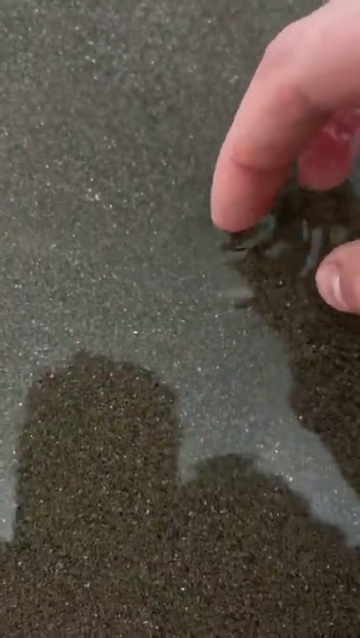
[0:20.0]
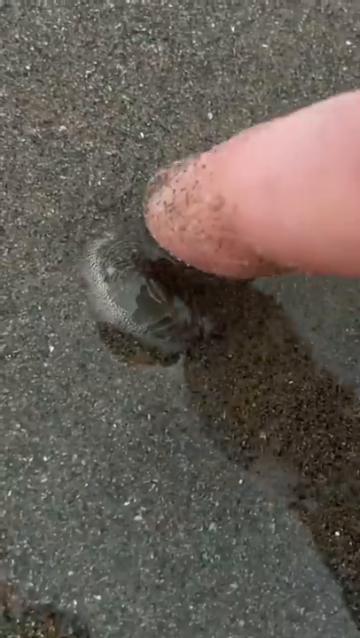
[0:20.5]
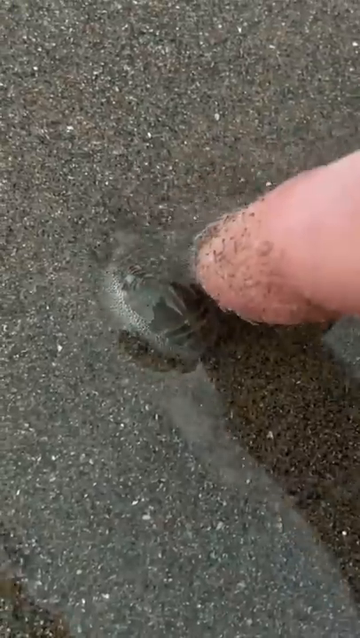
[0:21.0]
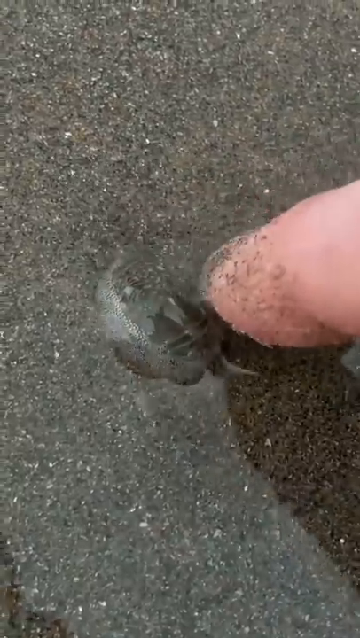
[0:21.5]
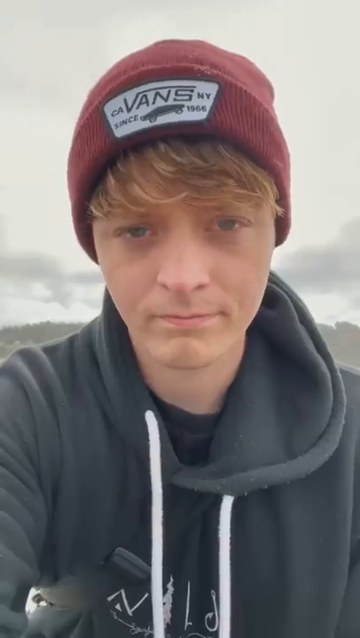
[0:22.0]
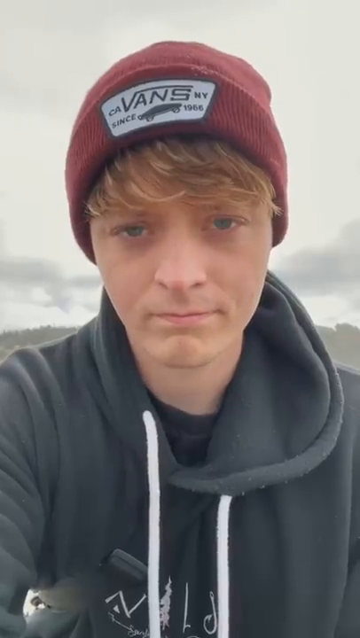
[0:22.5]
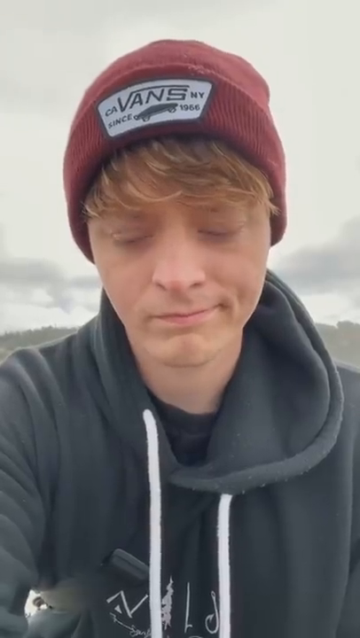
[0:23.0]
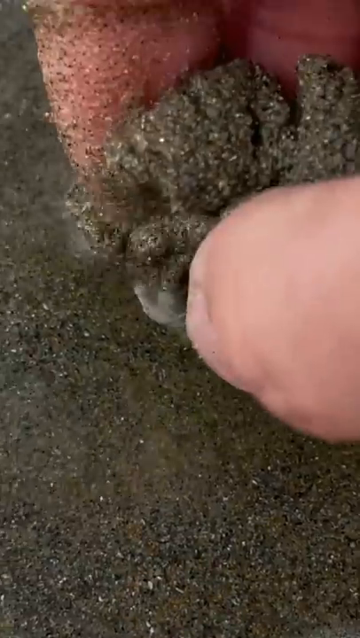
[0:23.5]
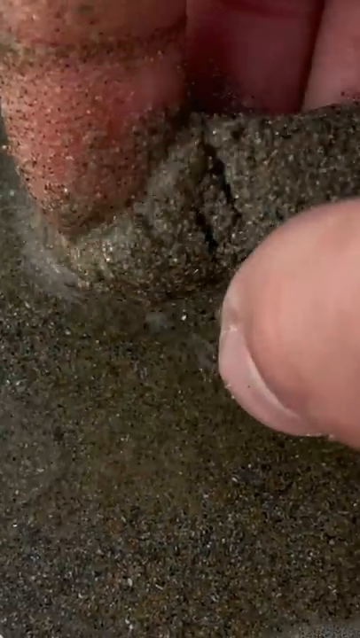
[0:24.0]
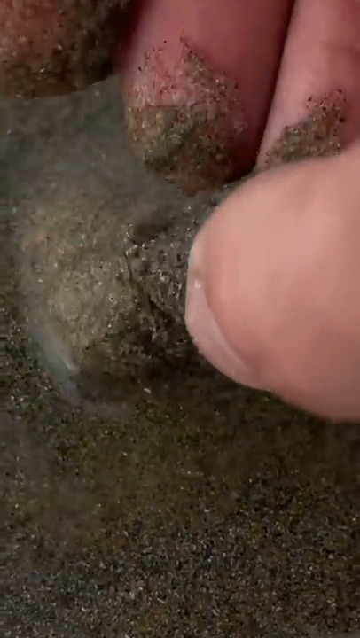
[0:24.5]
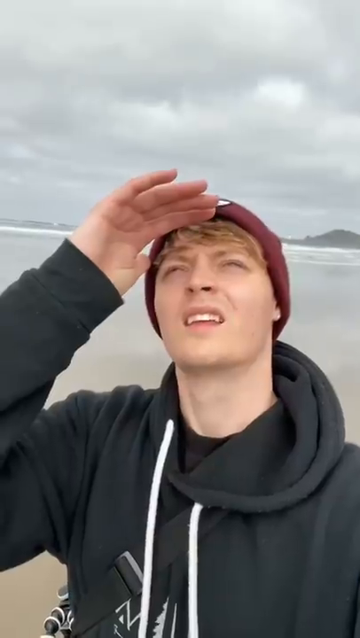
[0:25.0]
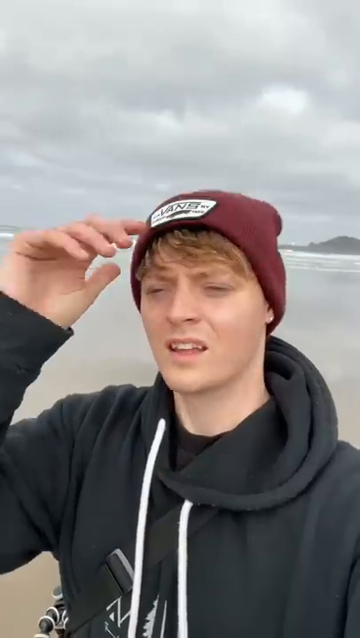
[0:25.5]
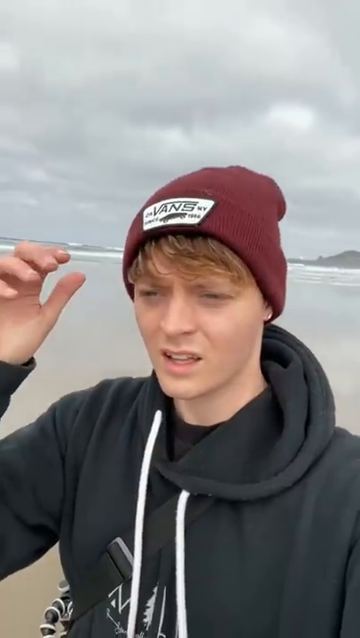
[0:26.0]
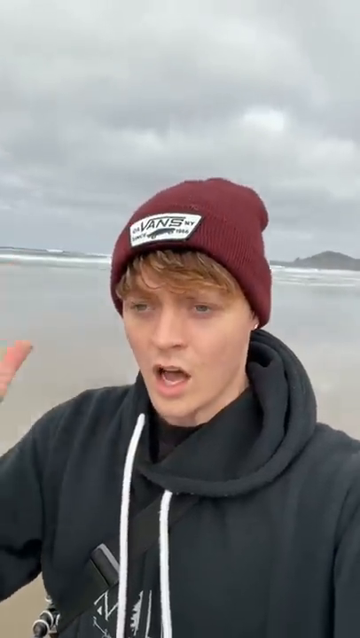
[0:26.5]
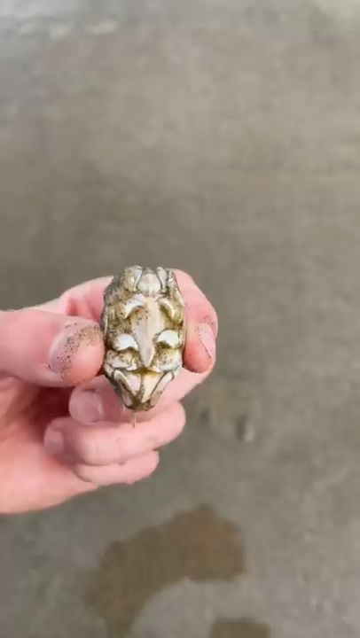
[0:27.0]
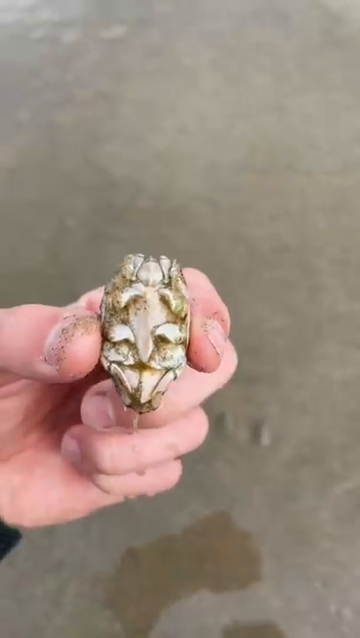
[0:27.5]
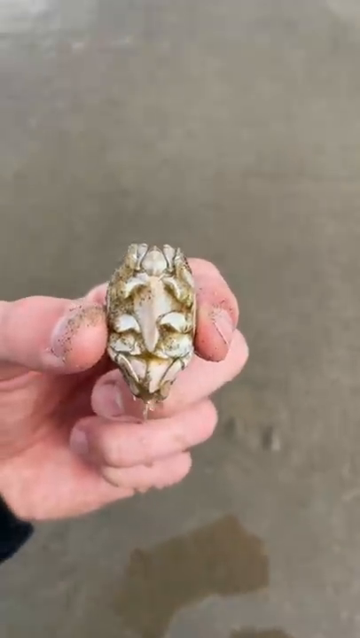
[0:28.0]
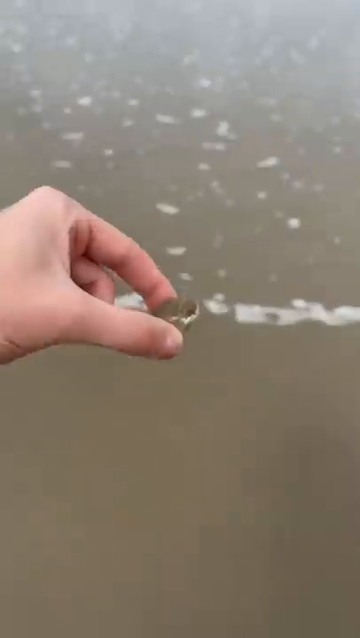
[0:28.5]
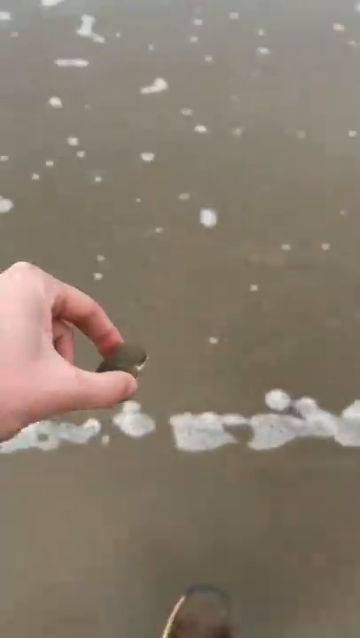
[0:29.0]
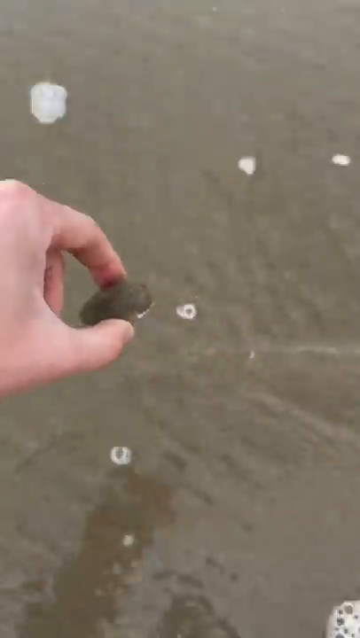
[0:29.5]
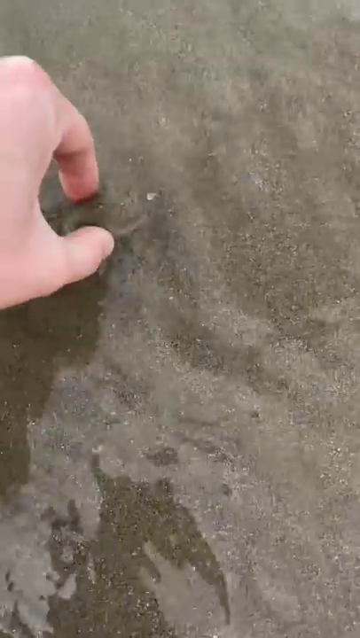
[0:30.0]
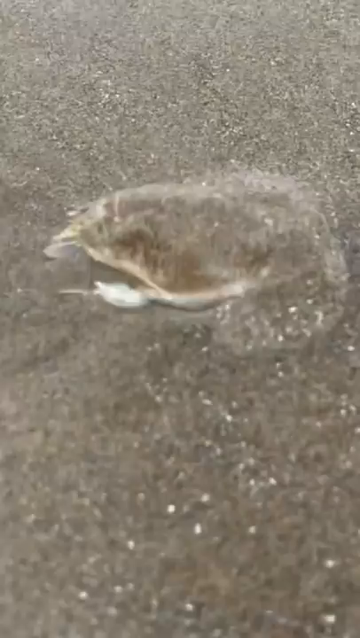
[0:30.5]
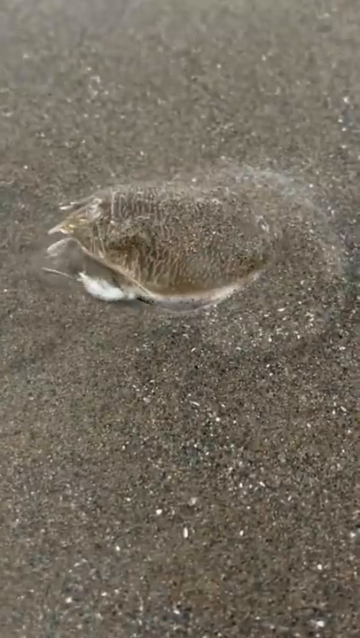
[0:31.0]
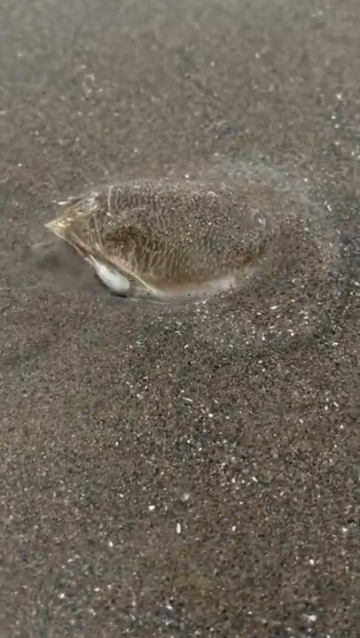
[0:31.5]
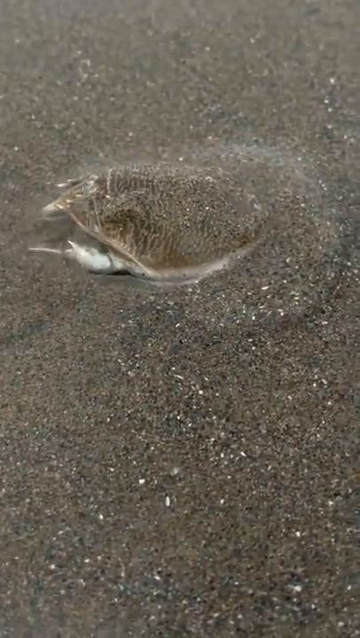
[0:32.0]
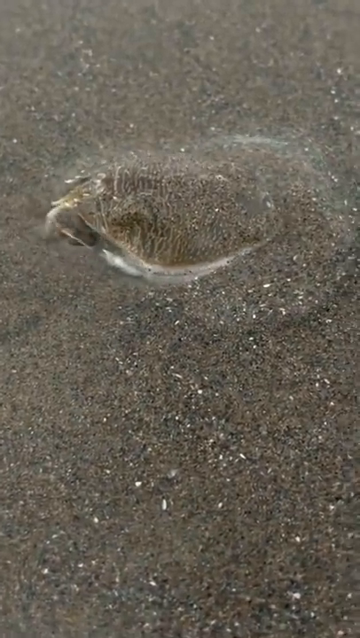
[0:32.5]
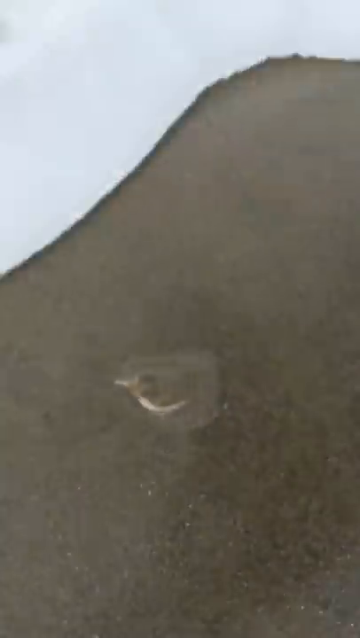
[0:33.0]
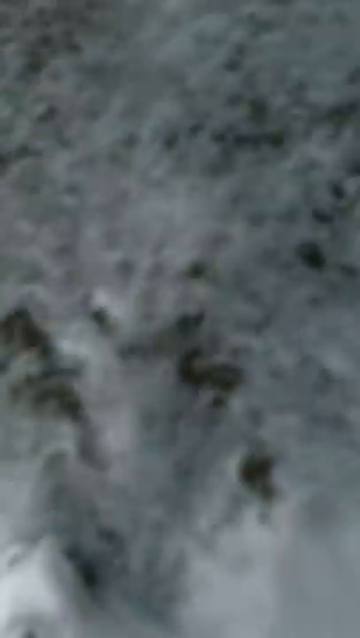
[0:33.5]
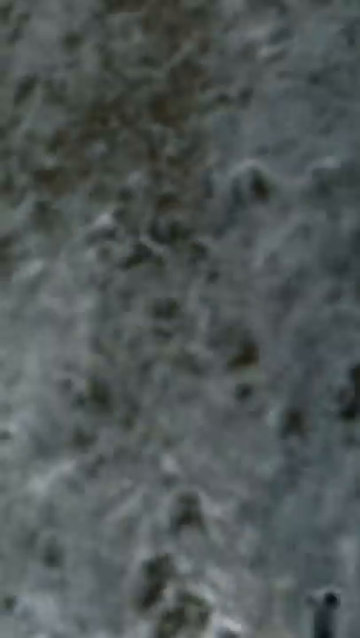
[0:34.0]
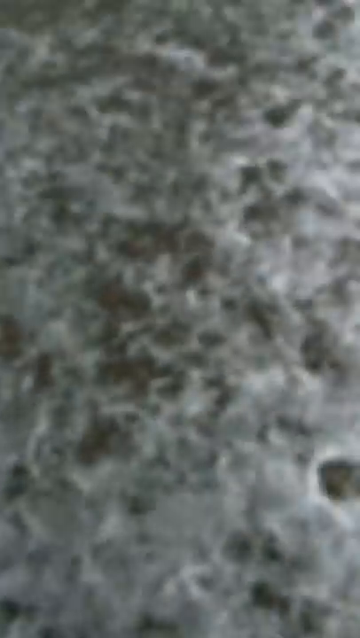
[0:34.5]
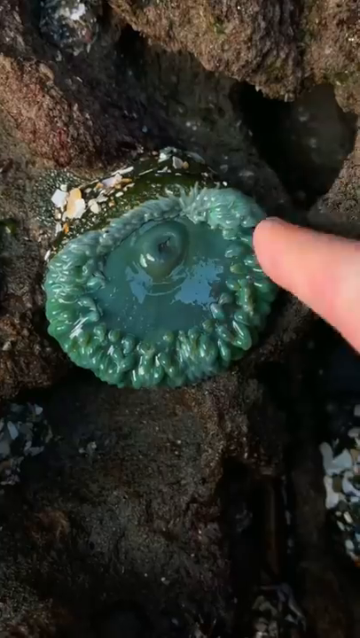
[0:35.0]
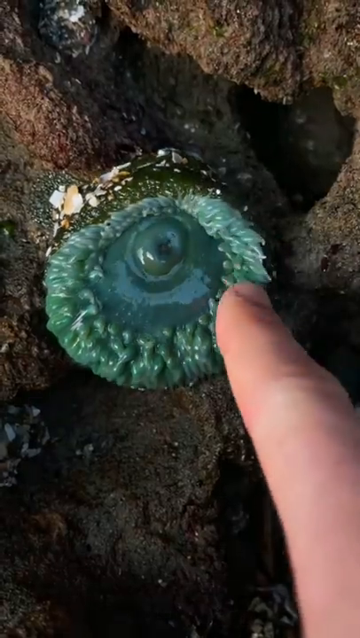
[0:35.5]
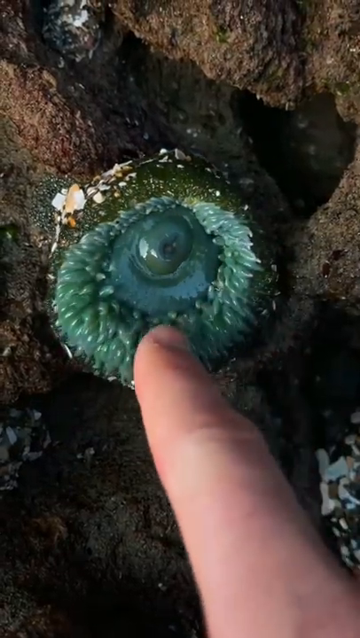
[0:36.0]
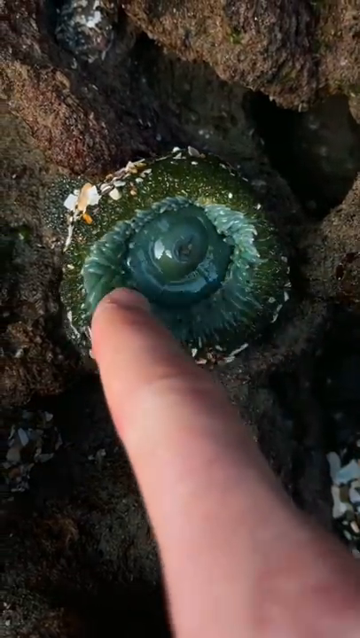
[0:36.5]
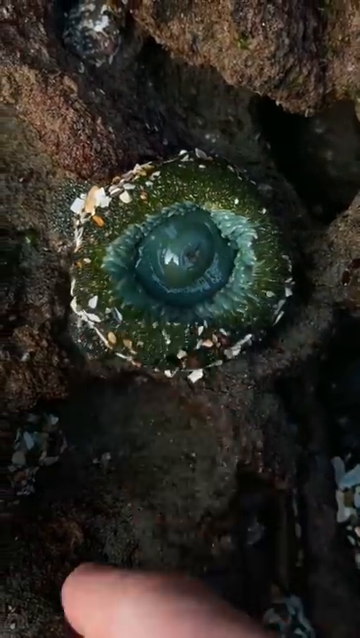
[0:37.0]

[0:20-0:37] The young man holds the little crab in his hand. He then looks very sad, covers the crab with a little bit of sand and buries it. He looks up to the sky and appears hopeful. When he looks back down, the crab looks whole and alive again, and the young man appears happy and content. Next, another sea creature appears, bluish in color, round and somewhat like an eyeball, with its arms exposed. The young man touches the arms, and they retract and close so that only the round eyeball shape shows. The video ends focused on the creature, which does not appear to be in distress.